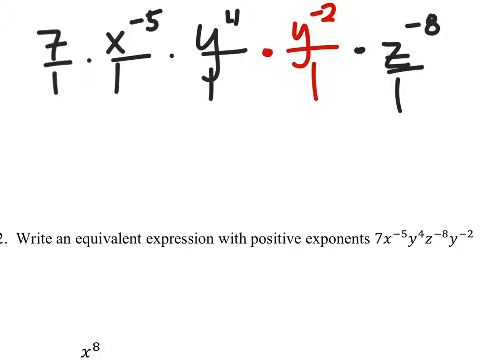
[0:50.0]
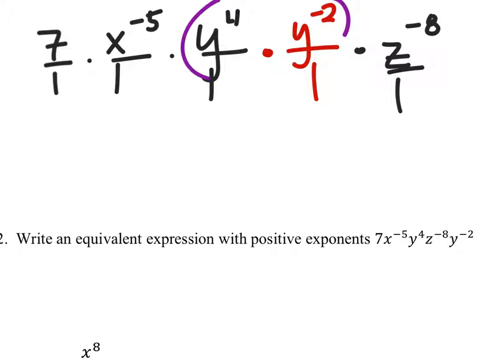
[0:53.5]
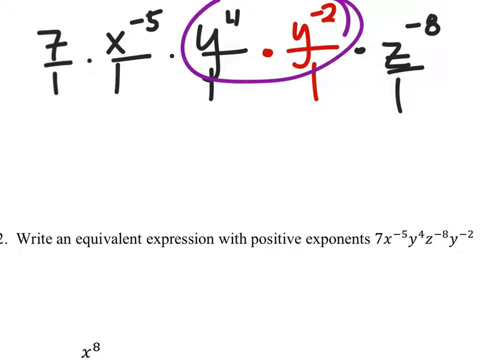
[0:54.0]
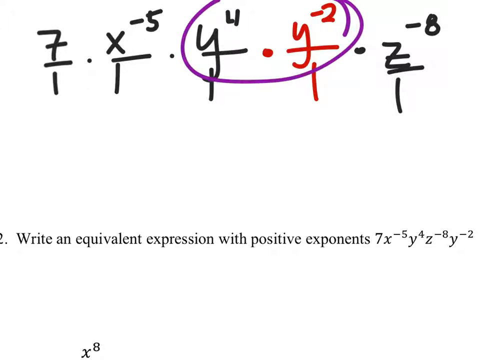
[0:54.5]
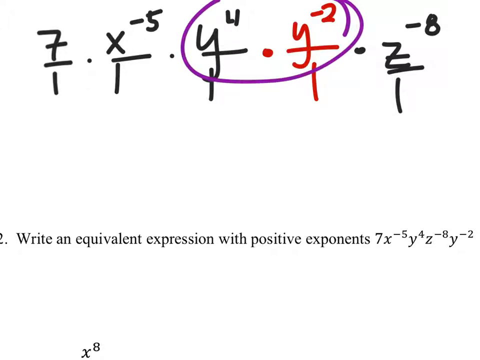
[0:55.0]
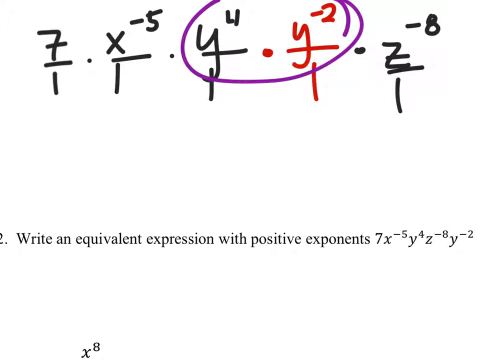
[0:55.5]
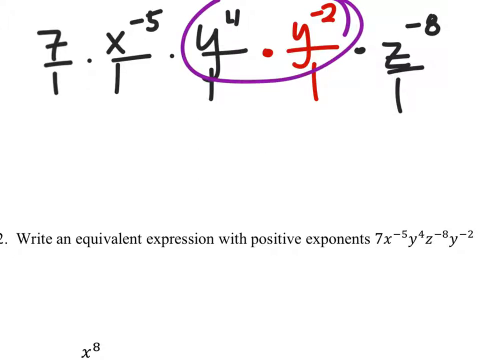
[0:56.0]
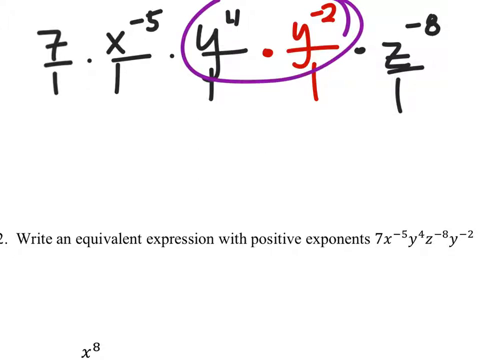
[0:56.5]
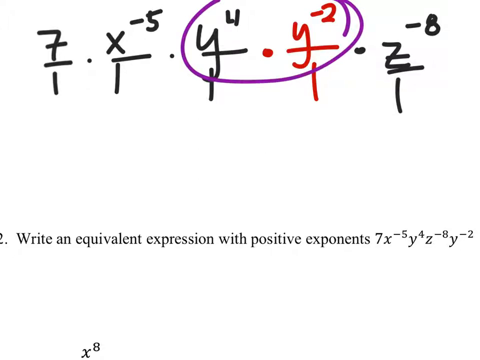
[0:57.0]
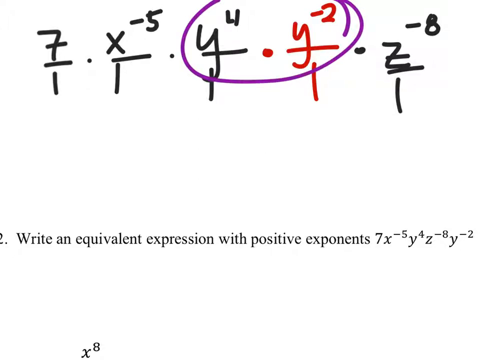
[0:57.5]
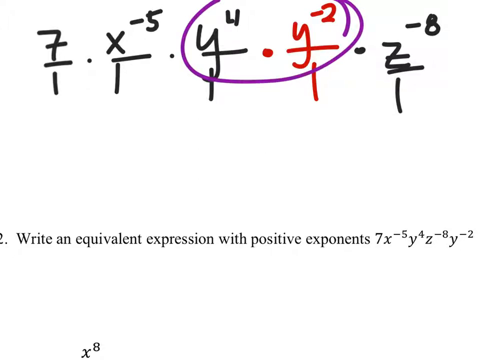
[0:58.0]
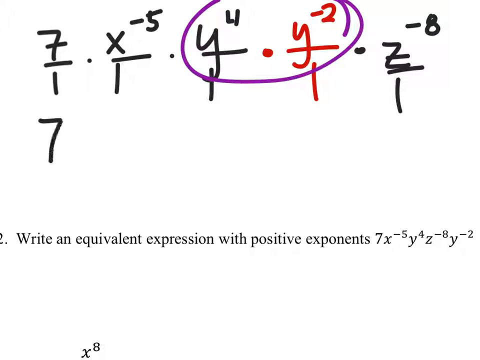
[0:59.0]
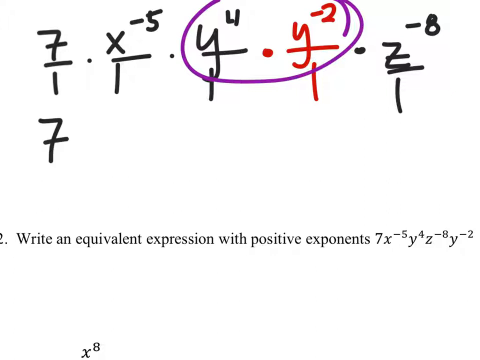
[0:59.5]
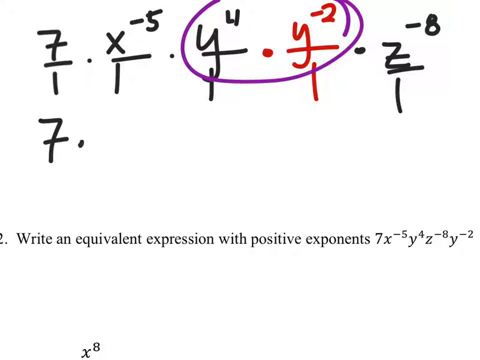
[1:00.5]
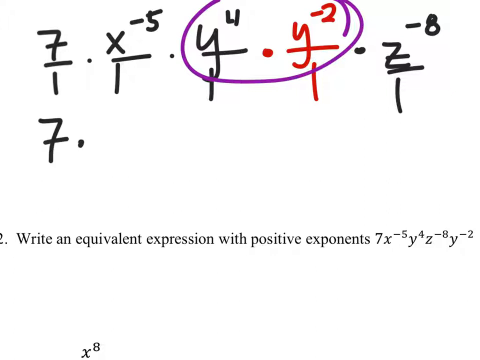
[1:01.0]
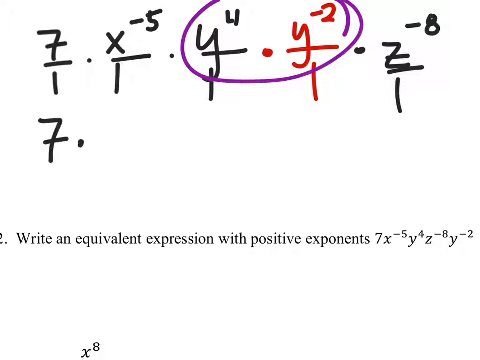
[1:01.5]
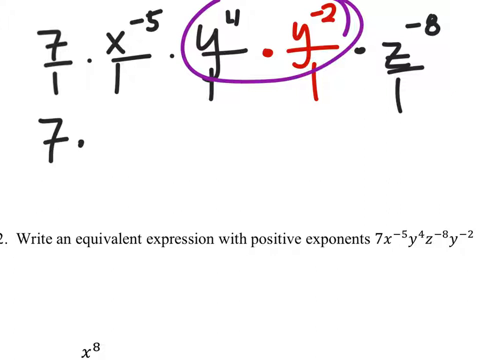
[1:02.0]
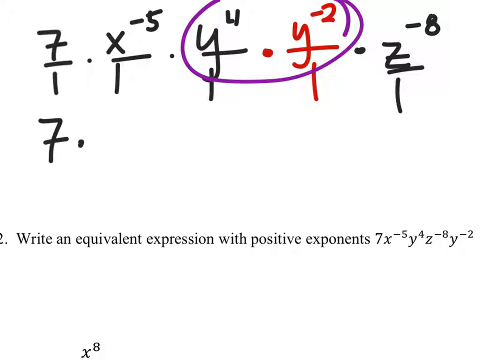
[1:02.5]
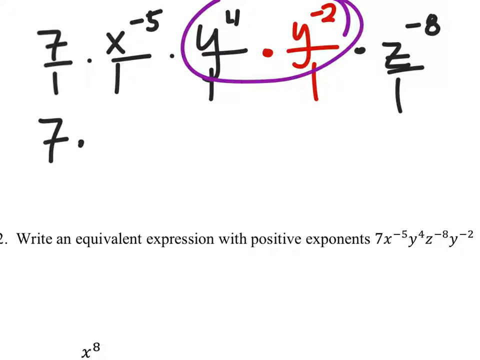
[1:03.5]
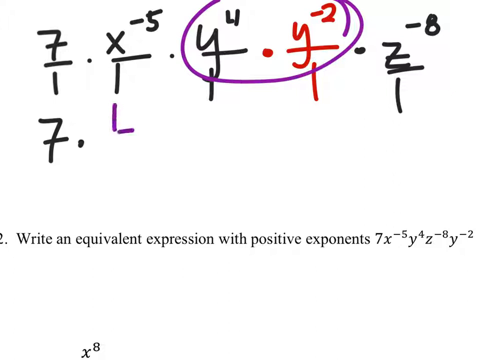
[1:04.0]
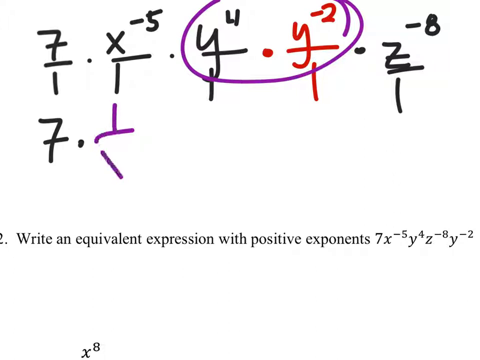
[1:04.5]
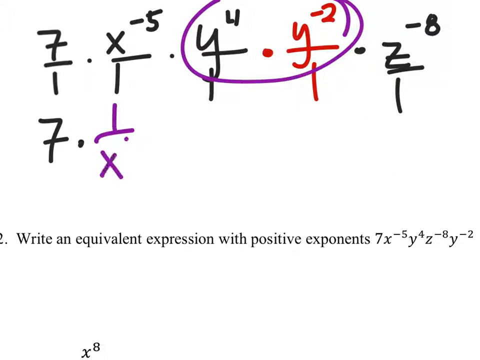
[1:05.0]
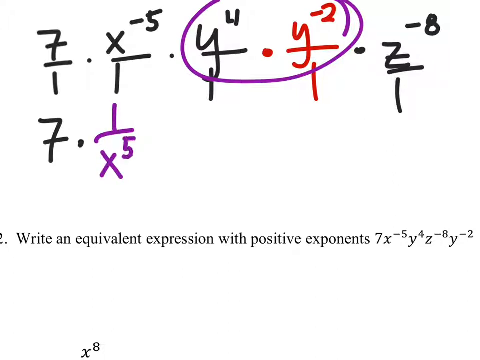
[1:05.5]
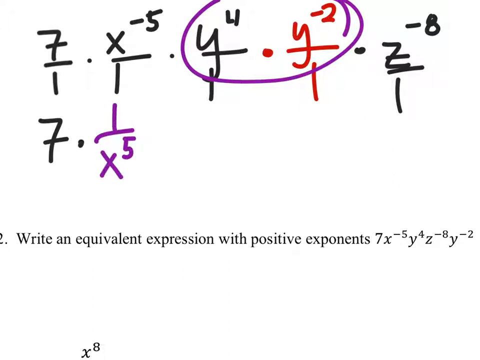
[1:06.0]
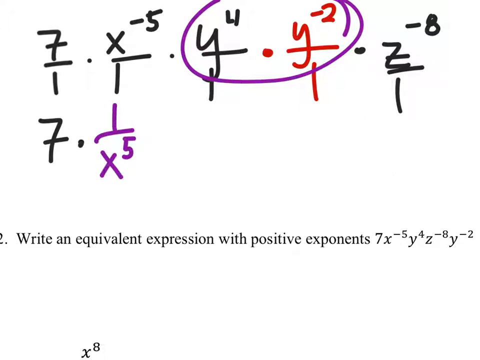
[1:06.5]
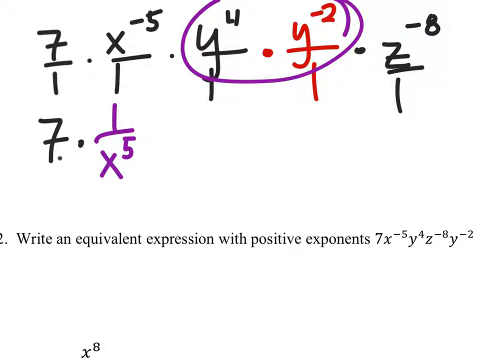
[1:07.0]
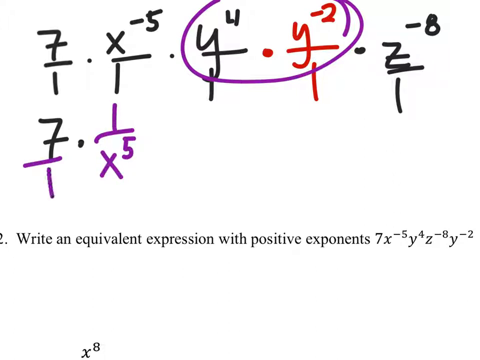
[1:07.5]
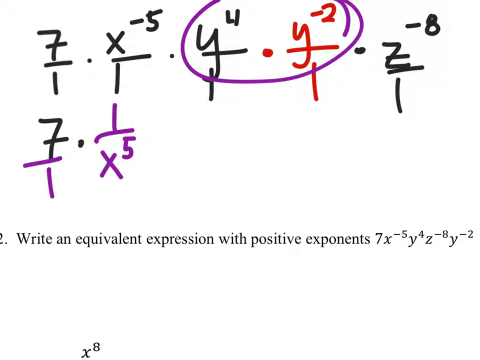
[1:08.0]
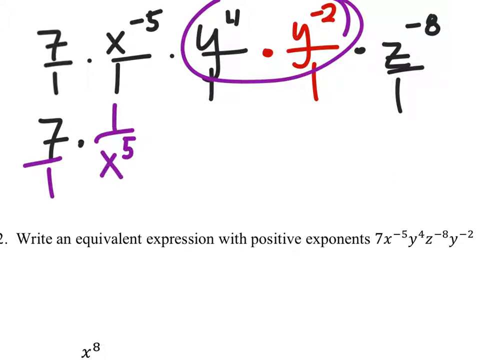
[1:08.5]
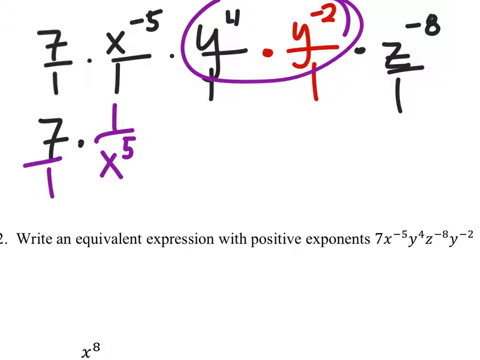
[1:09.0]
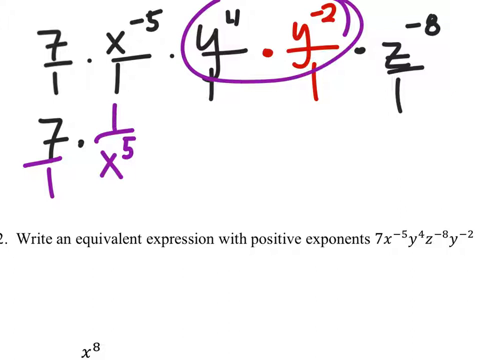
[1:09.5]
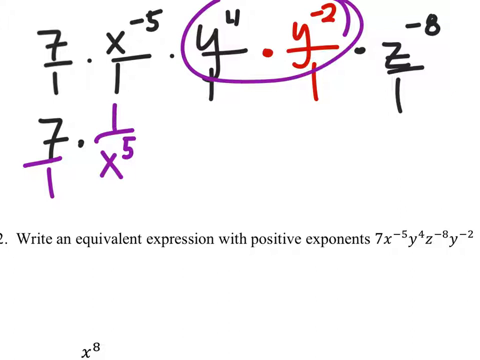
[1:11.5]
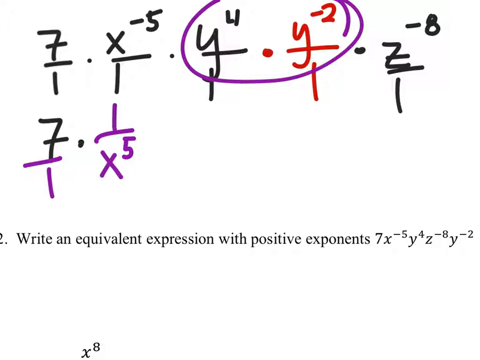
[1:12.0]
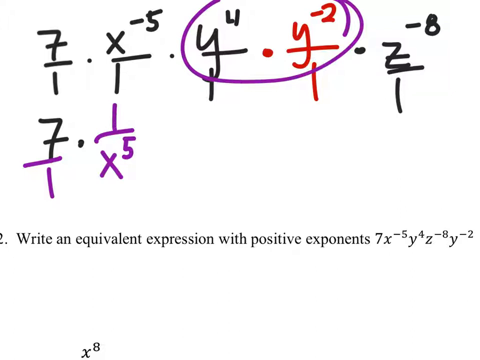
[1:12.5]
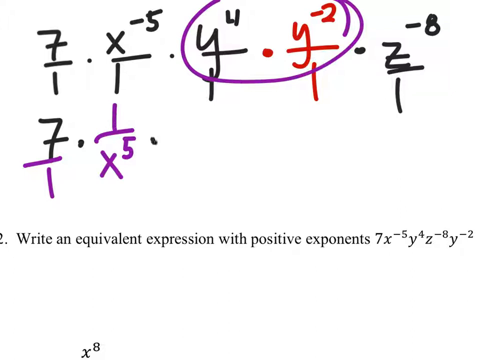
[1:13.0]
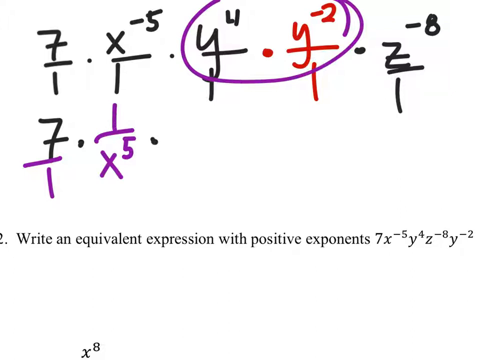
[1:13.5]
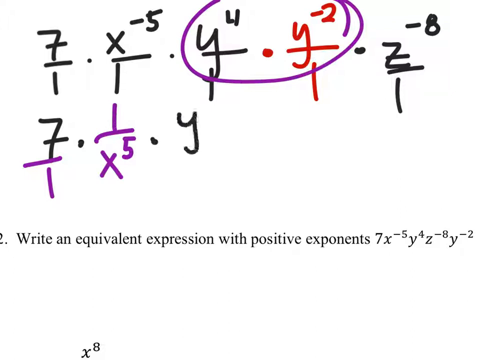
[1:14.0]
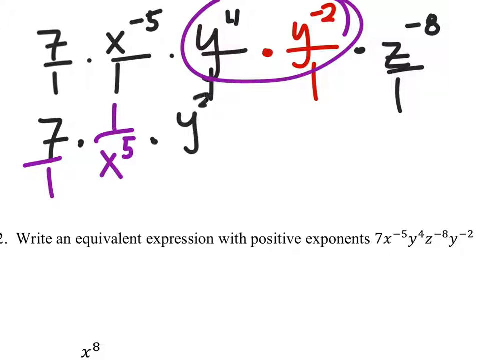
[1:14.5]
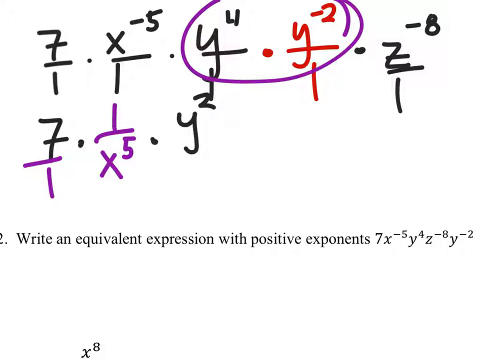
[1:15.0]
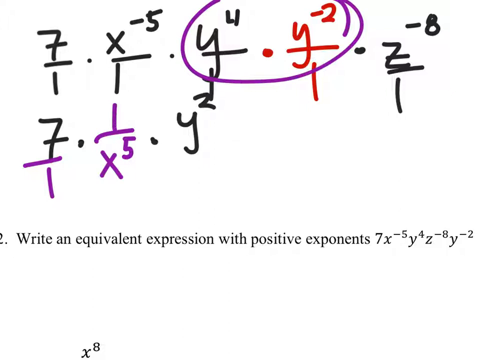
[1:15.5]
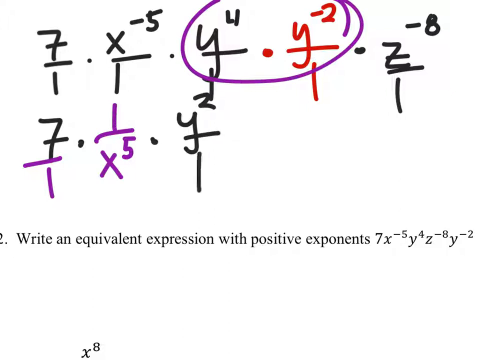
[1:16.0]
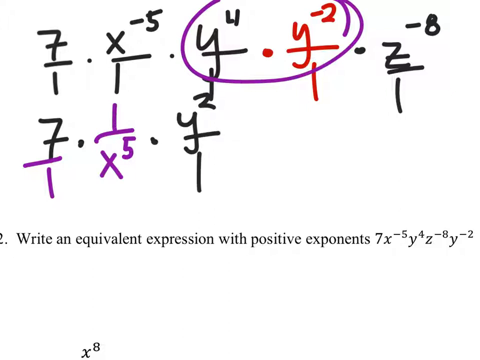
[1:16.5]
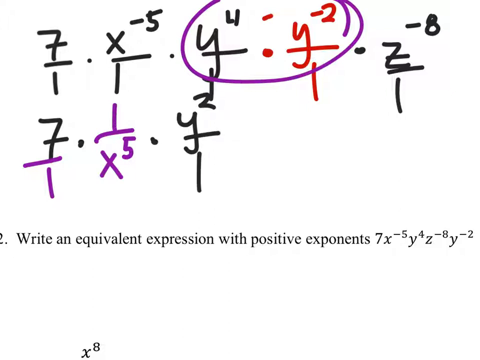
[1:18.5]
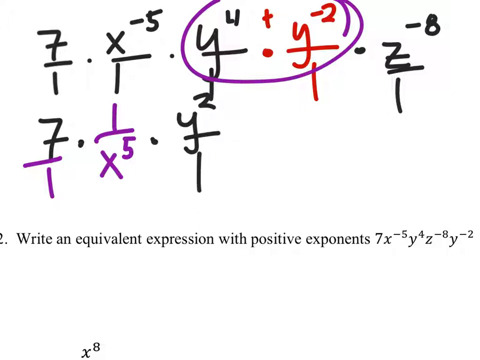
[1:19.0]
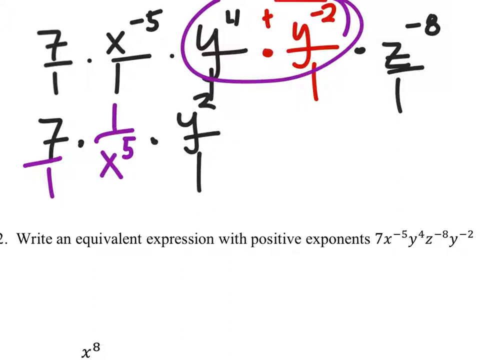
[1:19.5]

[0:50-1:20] The screen with the gradient remains. Across the top is the handwritten equation: 7 over 1 times x to the negative fifth over 1 times y to the fourth over 1, then in red, times y to the negative two over 1, and back in black, times z to the negative eight over 1. Beneath it, just above the gradient, is the typed point 2, "write an equivalent expression with positive exponents," with 7x to the negative fifth, y to the fourth, z to the negative eighth, and y to the negative two. A purple marker circles the y's, the y to the fourth and the y to the negative two. The equation then starts to be rewritten: 7 times, in purple, 1 over x to the fifth, and the 7 gets a purple "over 1." Then, in black, times y squared over 1 is written. Up above, inside the purple circle around the y's, a red plus is added and the 4 and the negative 2 are boxed in, indicating that the exponents are added together.